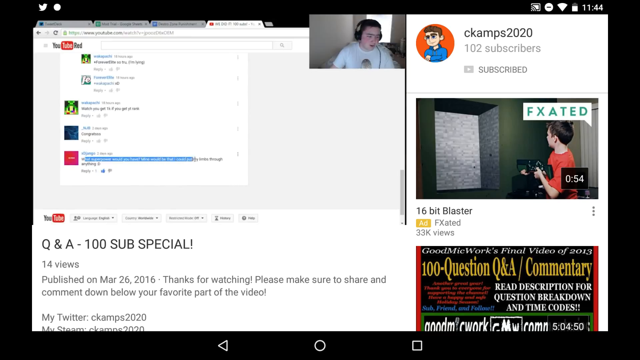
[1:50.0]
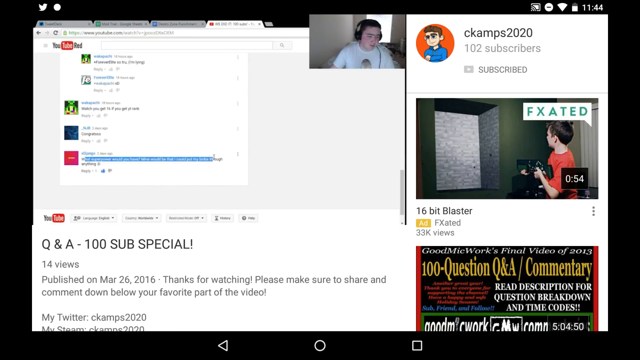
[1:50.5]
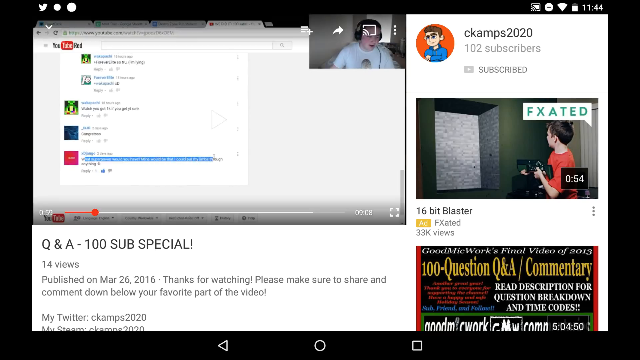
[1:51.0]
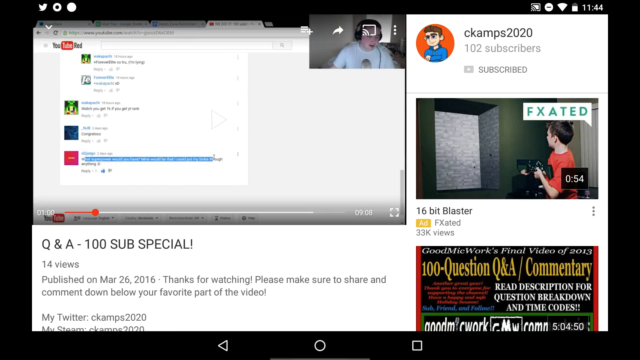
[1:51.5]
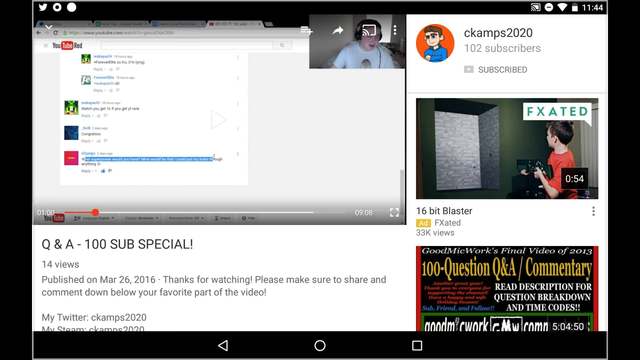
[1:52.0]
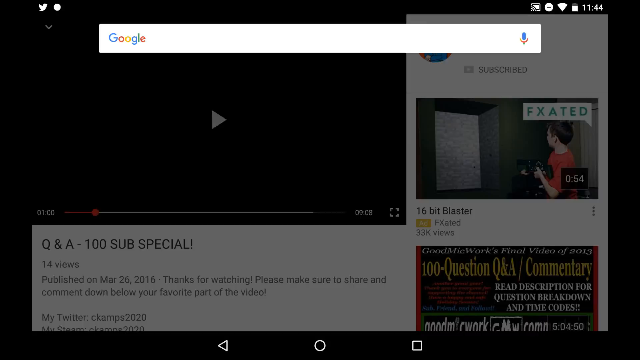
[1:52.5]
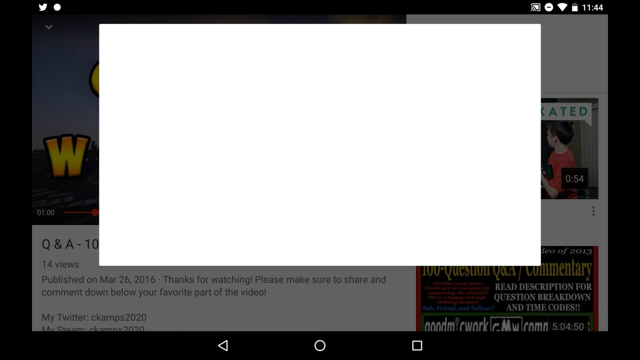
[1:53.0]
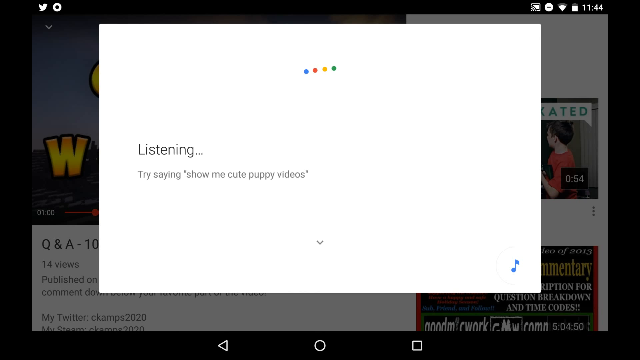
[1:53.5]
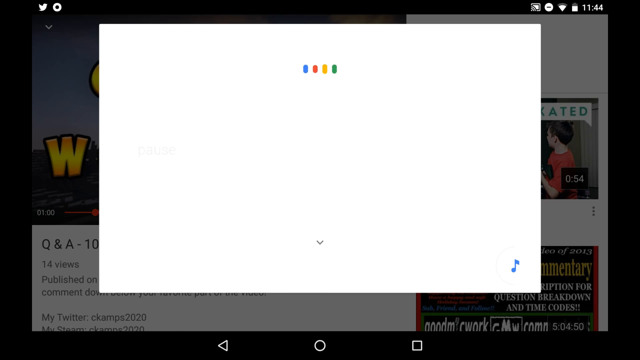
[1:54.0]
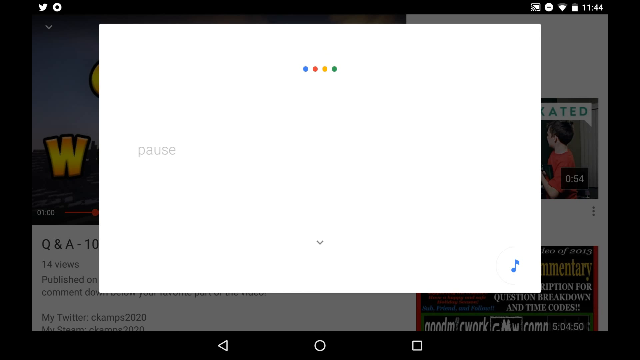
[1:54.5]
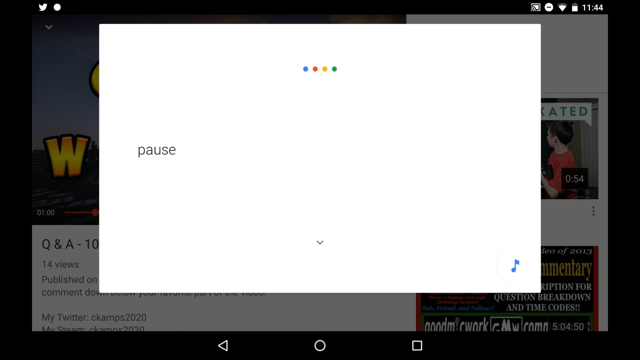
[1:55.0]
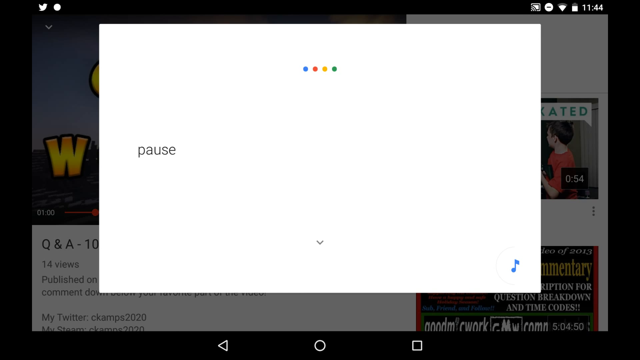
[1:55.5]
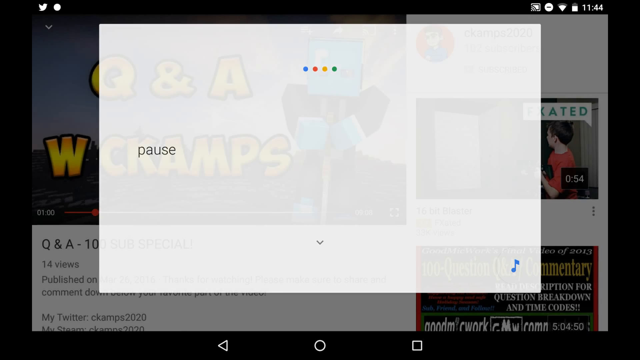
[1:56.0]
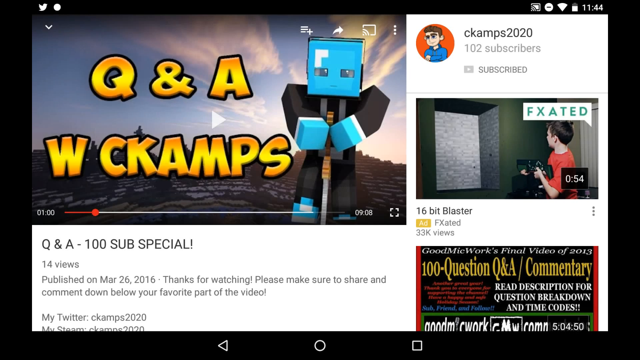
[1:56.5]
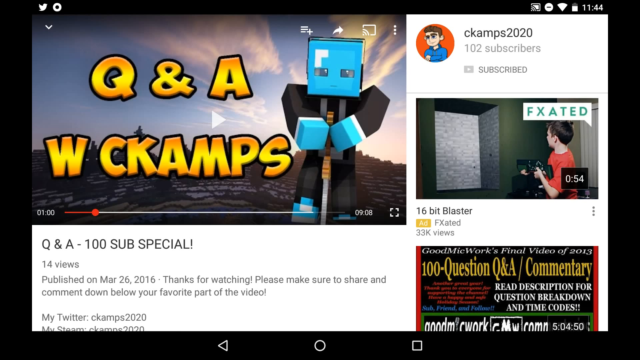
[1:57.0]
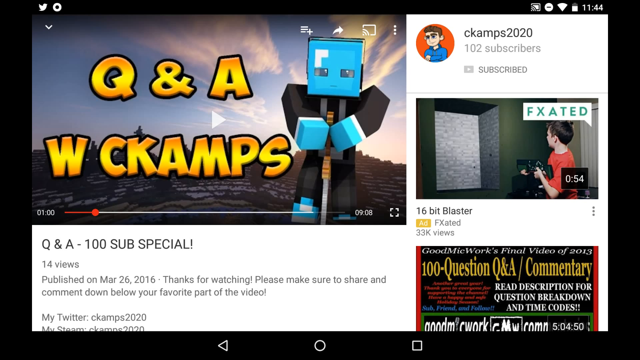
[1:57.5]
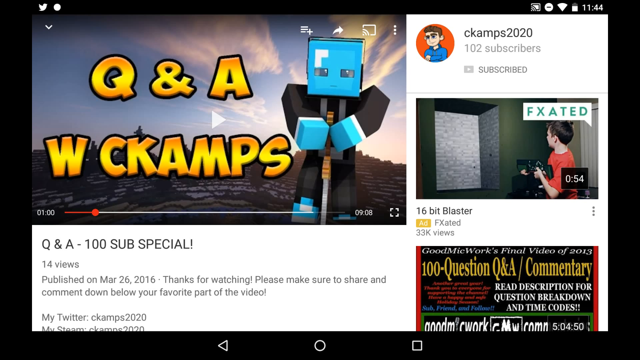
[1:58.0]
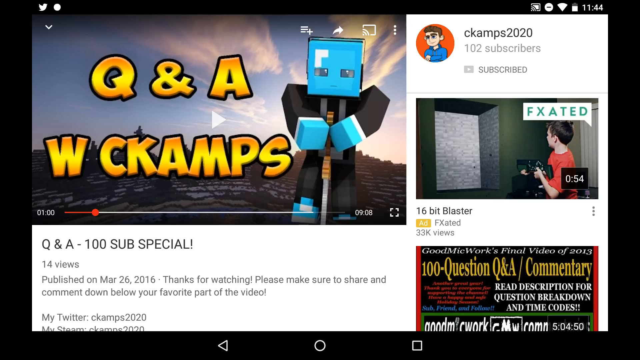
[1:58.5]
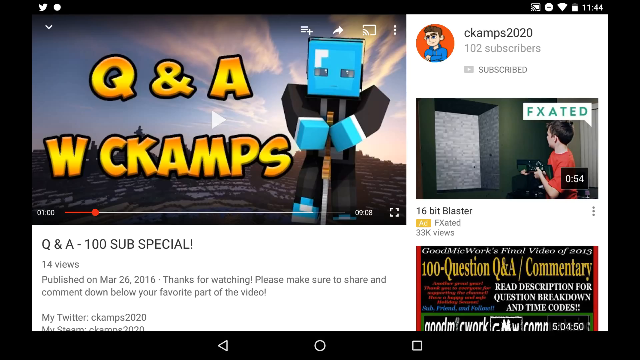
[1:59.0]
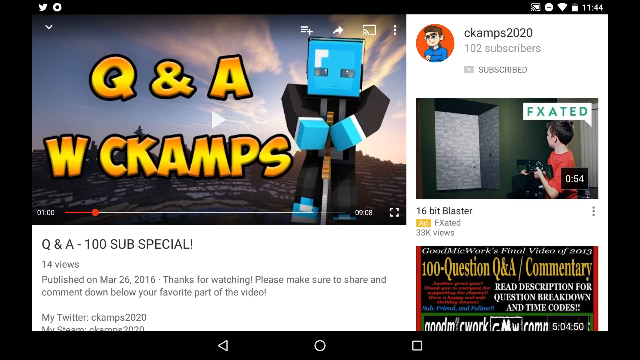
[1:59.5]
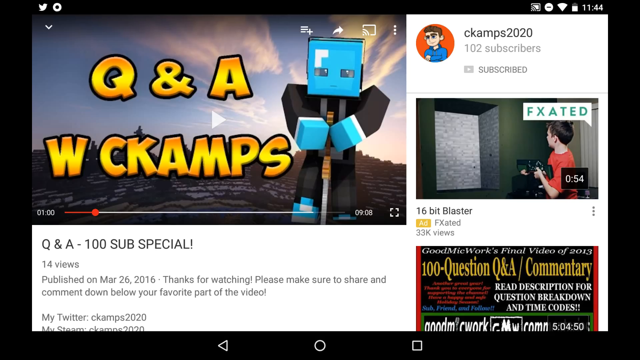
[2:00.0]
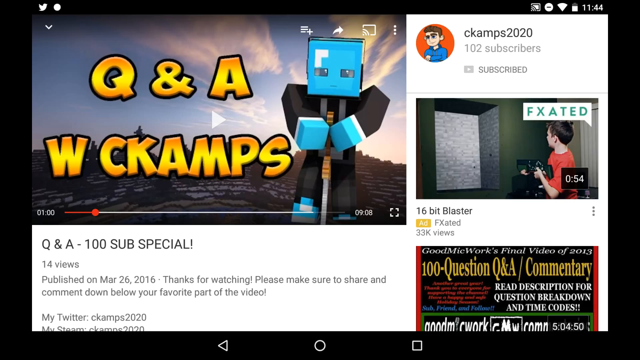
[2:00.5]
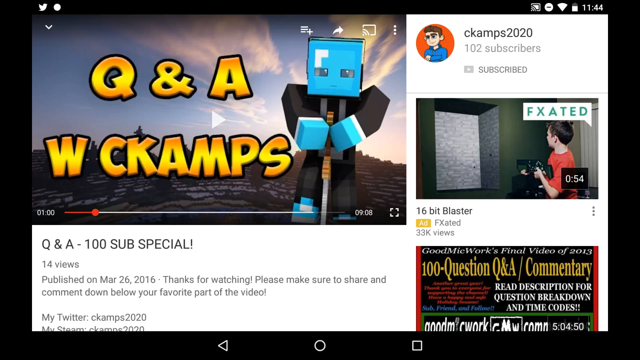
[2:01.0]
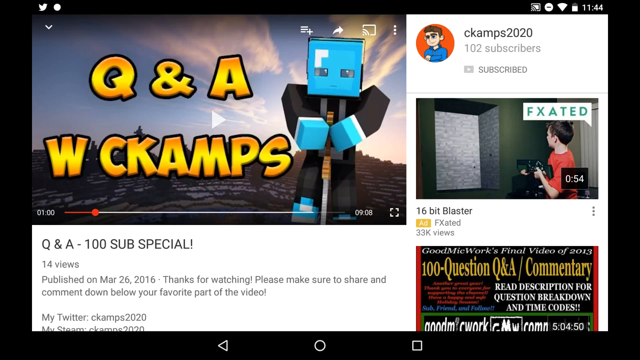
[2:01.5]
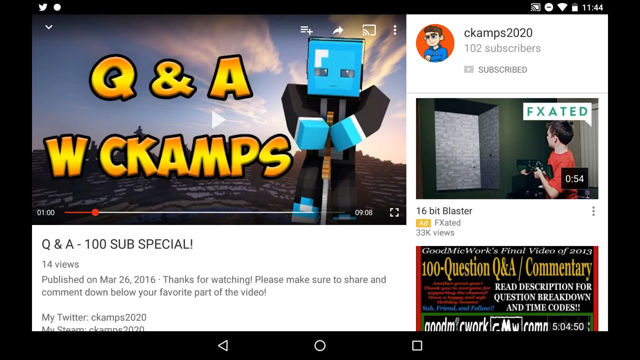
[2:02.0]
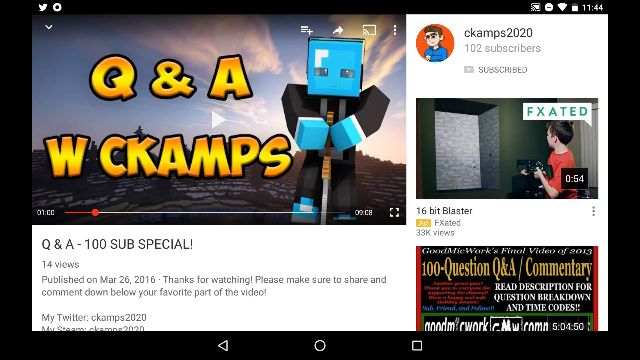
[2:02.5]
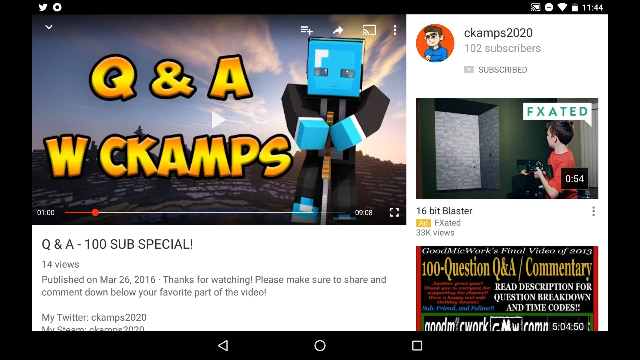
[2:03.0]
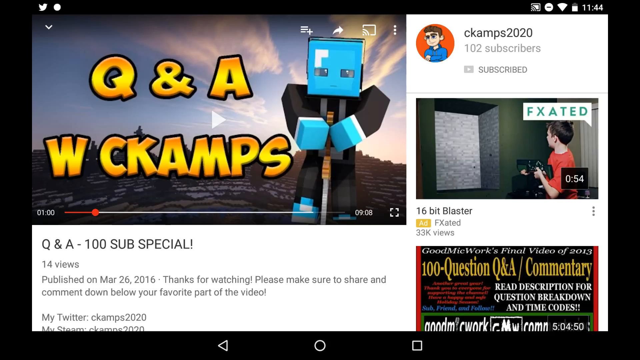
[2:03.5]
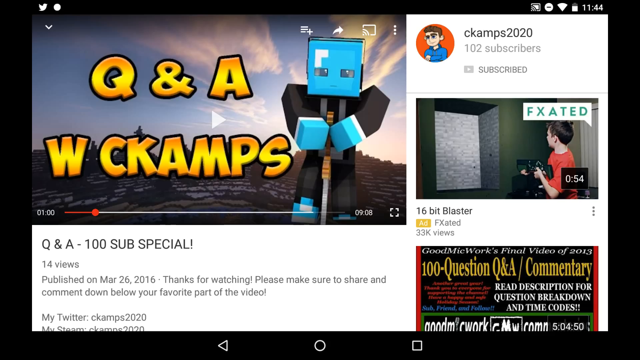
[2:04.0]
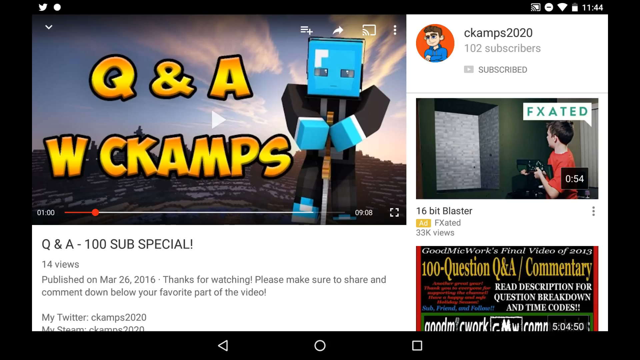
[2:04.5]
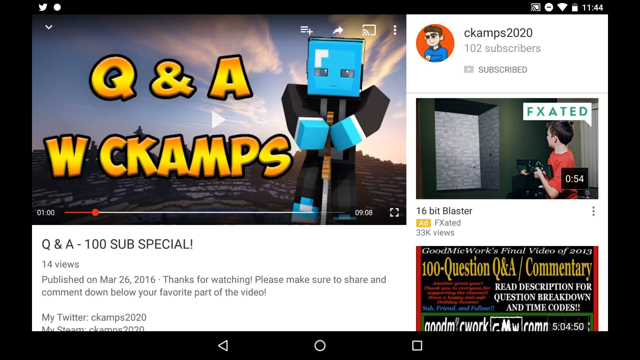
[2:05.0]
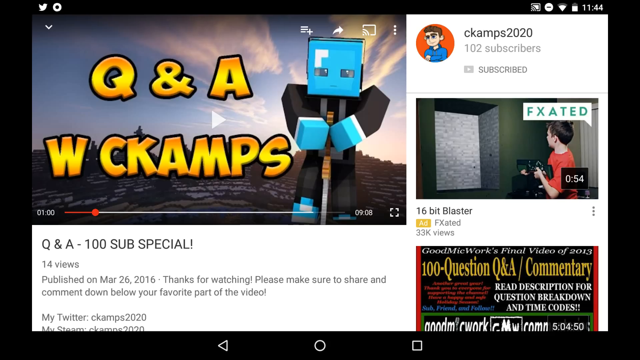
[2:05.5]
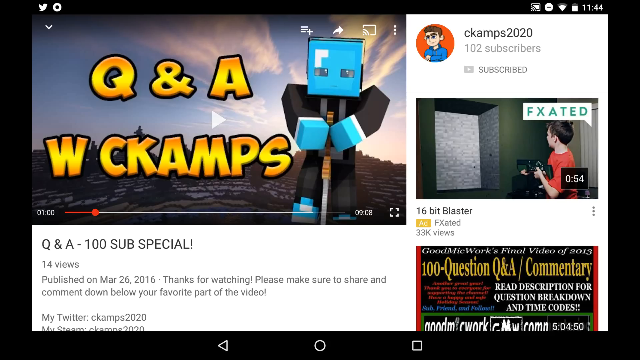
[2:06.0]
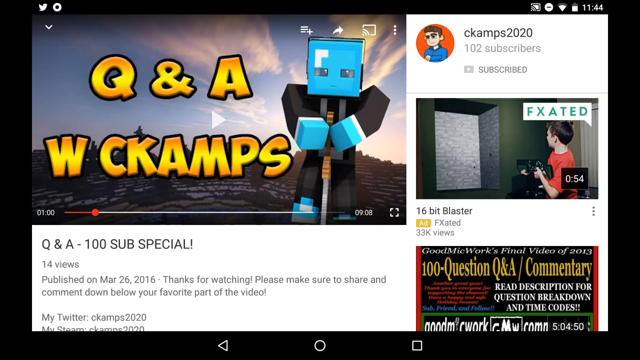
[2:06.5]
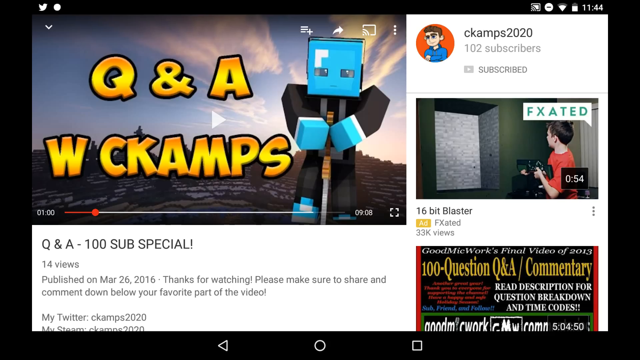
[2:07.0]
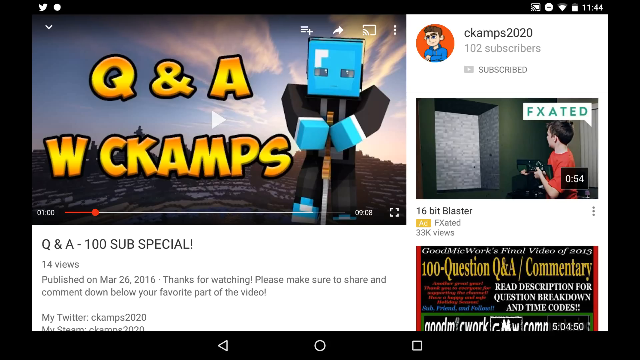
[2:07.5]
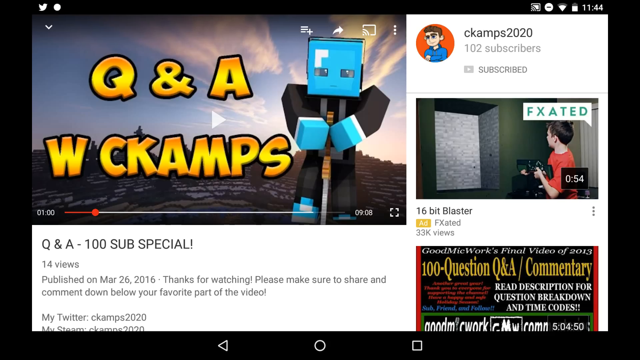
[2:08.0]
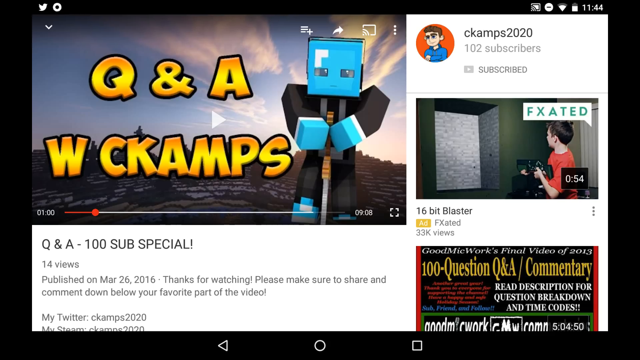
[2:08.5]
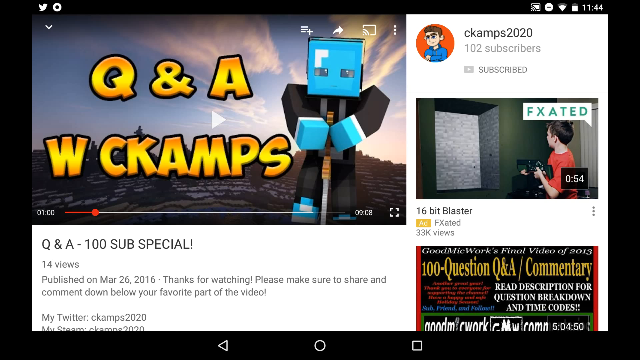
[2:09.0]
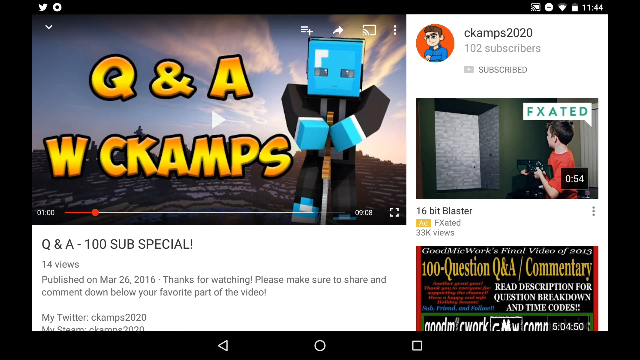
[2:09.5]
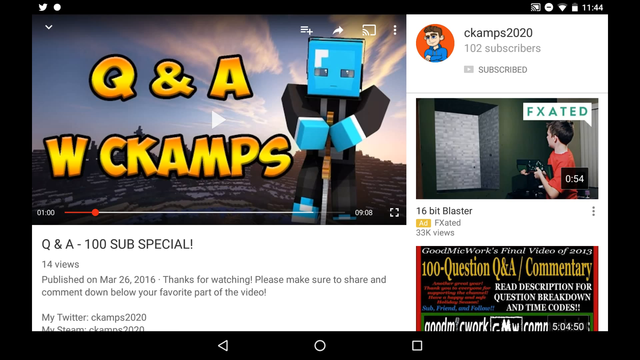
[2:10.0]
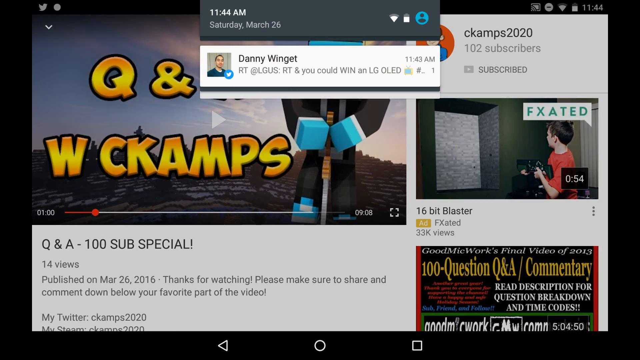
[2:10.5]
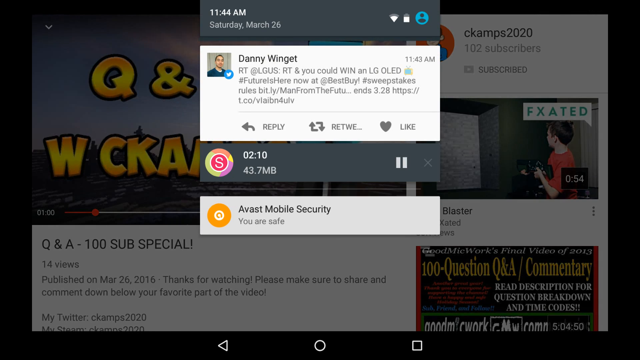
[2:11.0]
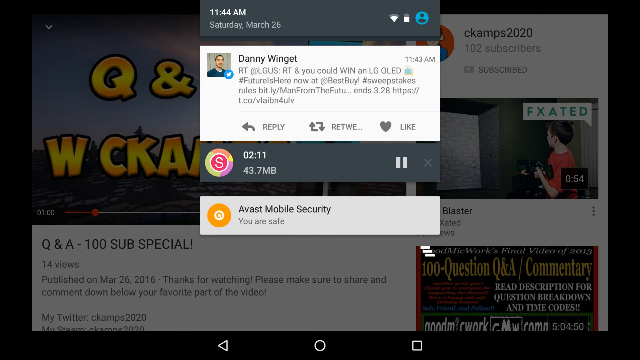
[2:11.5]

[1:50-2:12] A boy is recording himself on screen, with text saying "YouTube Red" and some comments. This is part of a YouTube video titled "Q&A 100 subs special" with 14 views, published on March 26, 2016, with the text "Thanks for watching. Please make sure to share and comment down below your favorite part of the video. My Twitter CCAMP 2020 and my Steam CCAMP 2020". CCAMP 2020 has 102 subscribers, and the person recording is subscribed. Videos listed include ads, one mentioning a 16-bit blaster, and another video titled "100 question Q&A commentary". The user copies some of the text, and a Google box pops up saying "listening", "try saying show me cute puppy videos" and "pause". The screen then returns to the regular view of the "Q&A 100 subspecial" YouTube video. Notifications pop up for Saturday, March 26: a notification from Danny Winget, a retweet from Twitter, with options to reply, retweet, or like, and an Avast Mobile Security notification that says "you are safe".